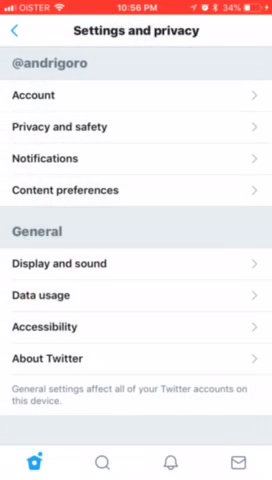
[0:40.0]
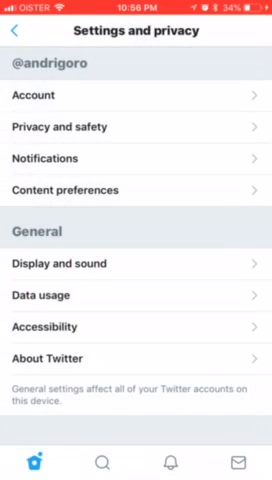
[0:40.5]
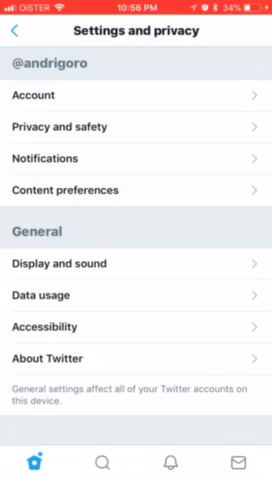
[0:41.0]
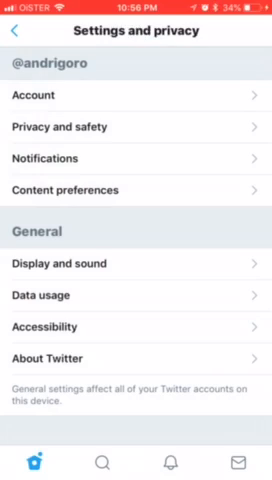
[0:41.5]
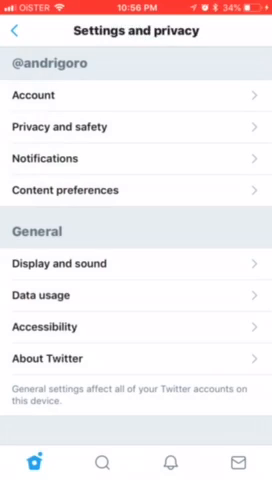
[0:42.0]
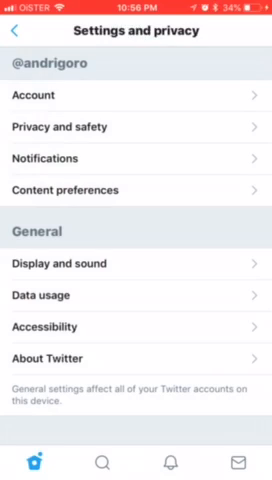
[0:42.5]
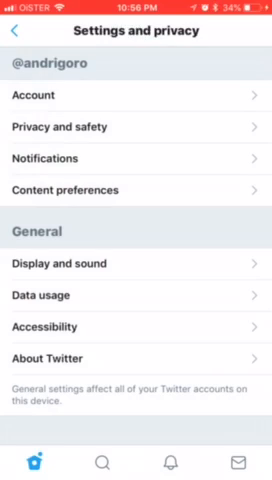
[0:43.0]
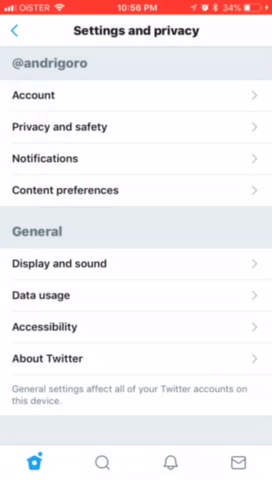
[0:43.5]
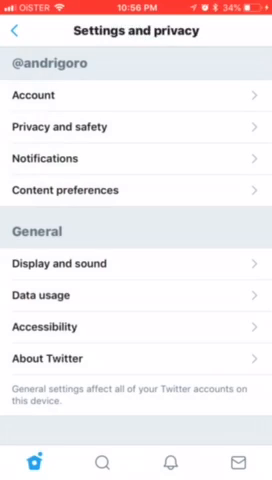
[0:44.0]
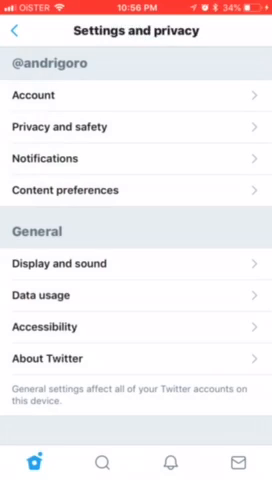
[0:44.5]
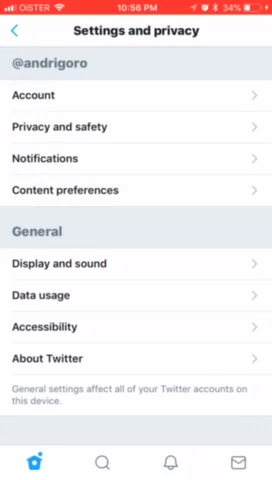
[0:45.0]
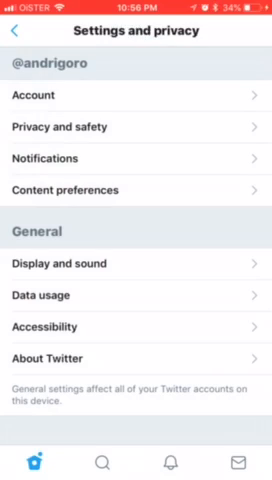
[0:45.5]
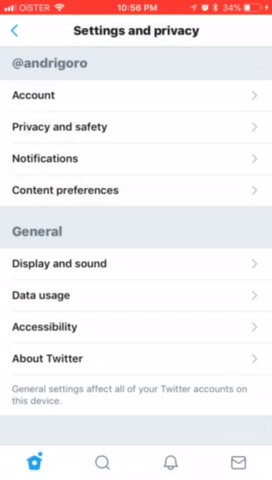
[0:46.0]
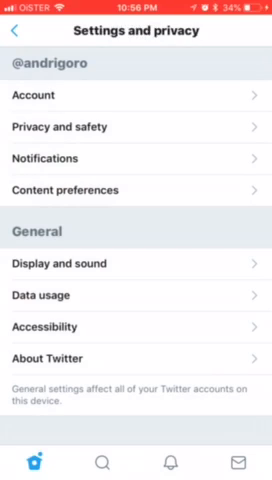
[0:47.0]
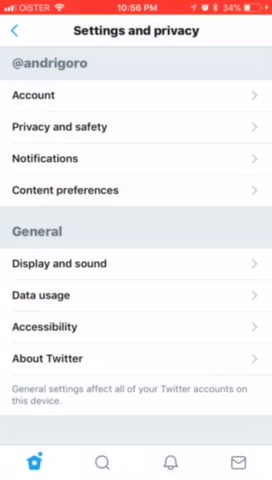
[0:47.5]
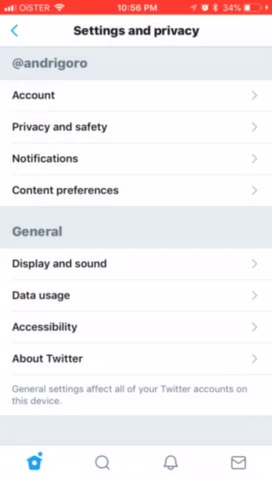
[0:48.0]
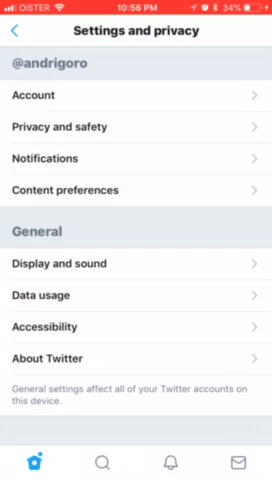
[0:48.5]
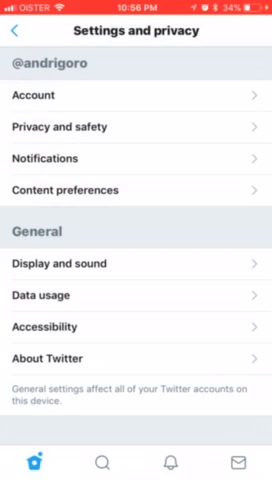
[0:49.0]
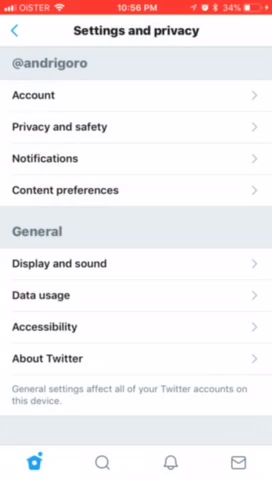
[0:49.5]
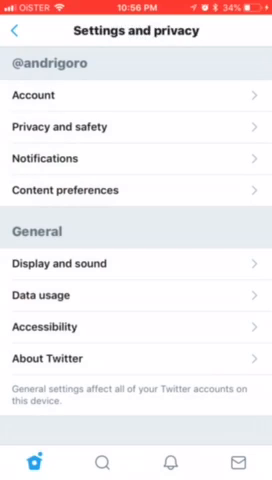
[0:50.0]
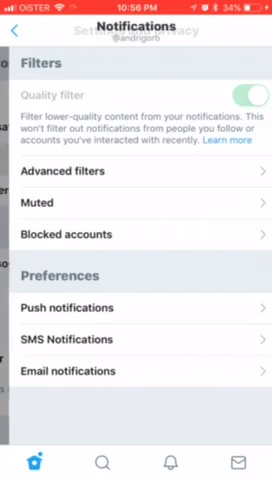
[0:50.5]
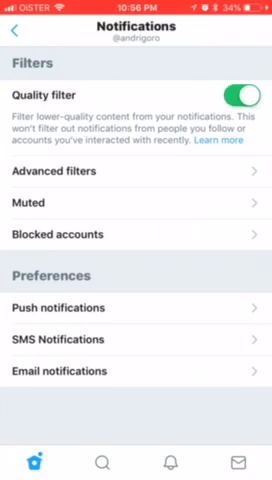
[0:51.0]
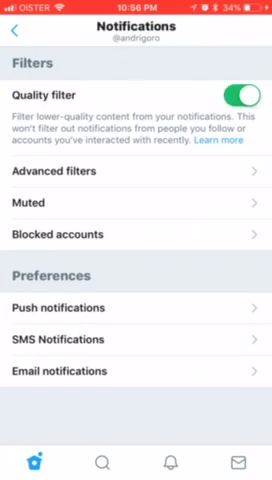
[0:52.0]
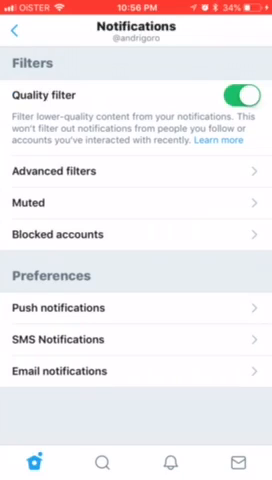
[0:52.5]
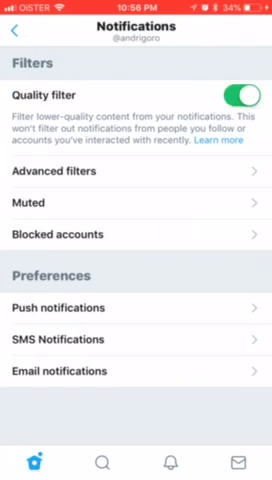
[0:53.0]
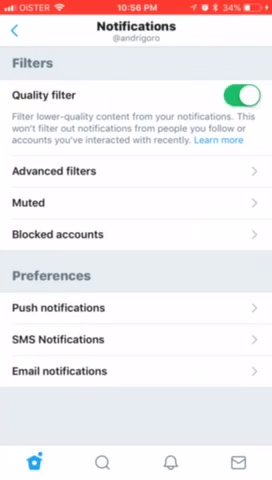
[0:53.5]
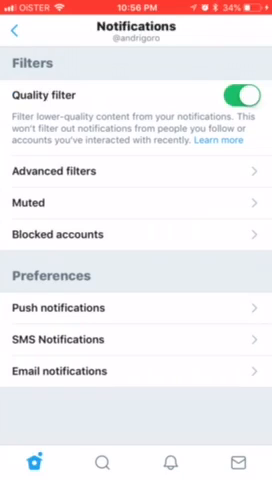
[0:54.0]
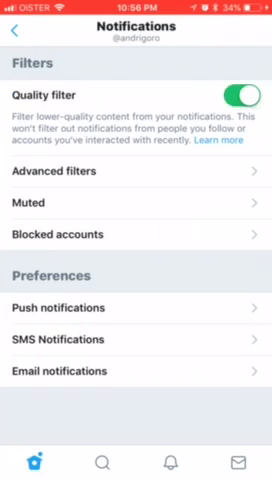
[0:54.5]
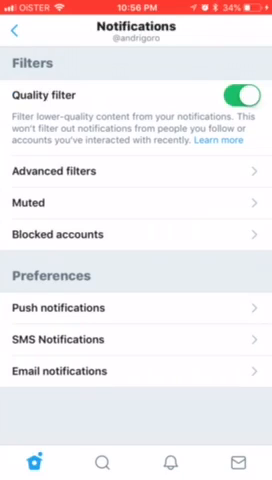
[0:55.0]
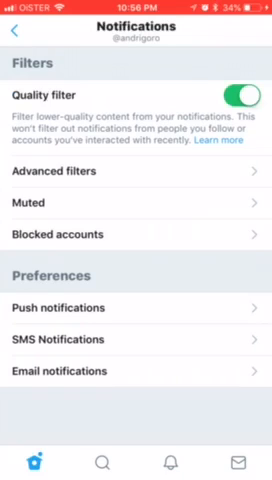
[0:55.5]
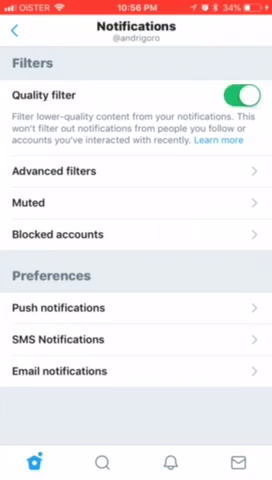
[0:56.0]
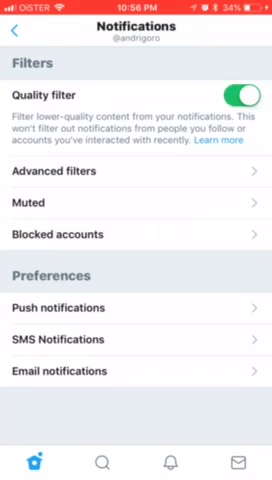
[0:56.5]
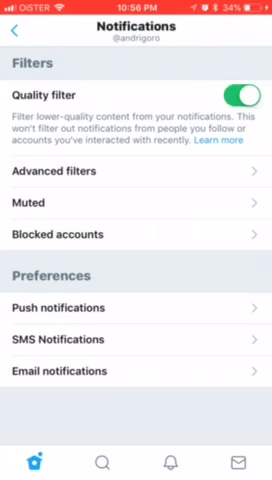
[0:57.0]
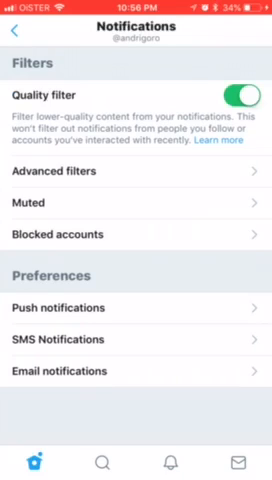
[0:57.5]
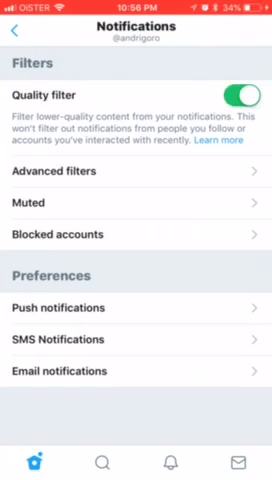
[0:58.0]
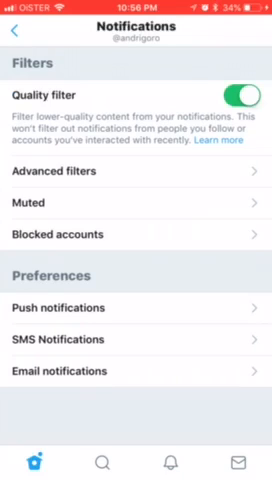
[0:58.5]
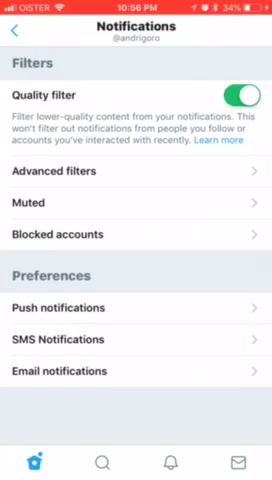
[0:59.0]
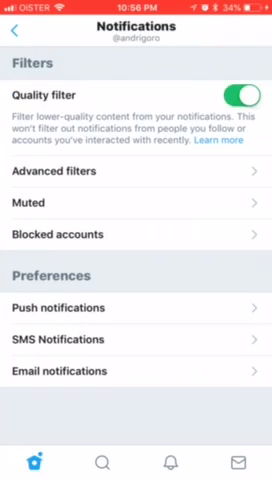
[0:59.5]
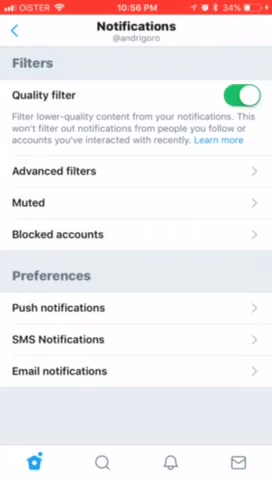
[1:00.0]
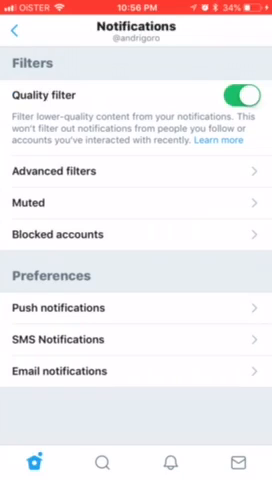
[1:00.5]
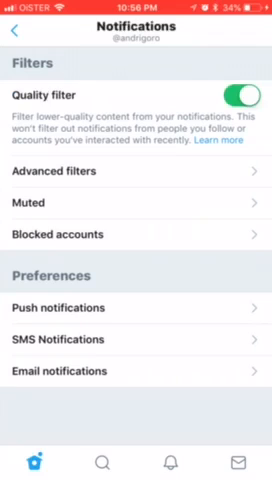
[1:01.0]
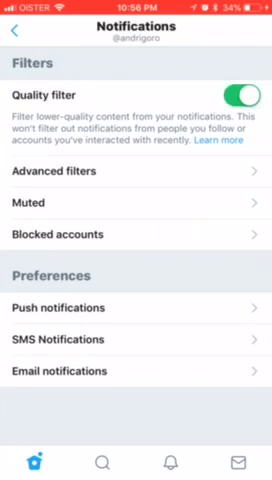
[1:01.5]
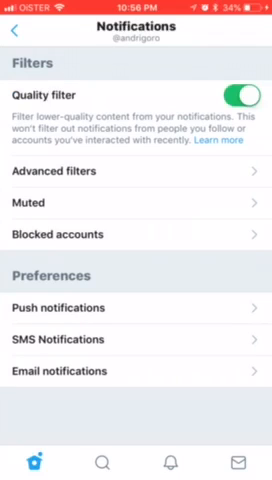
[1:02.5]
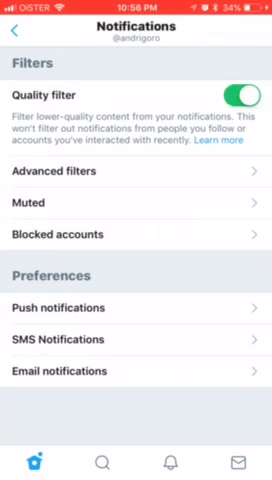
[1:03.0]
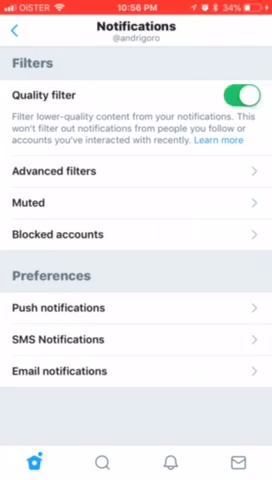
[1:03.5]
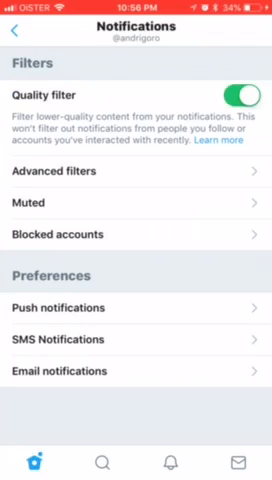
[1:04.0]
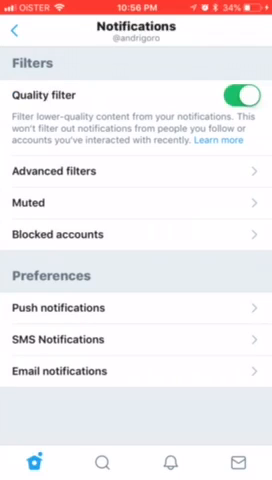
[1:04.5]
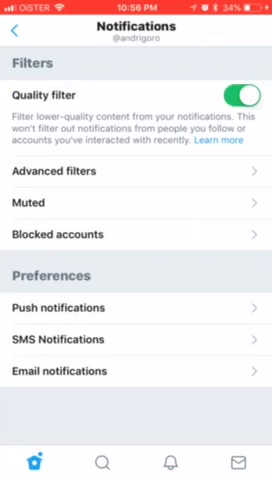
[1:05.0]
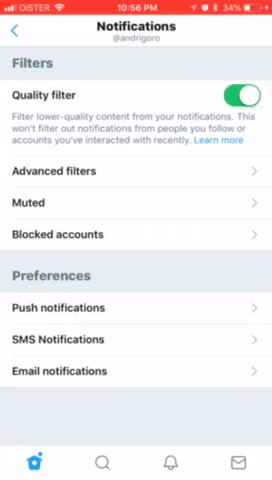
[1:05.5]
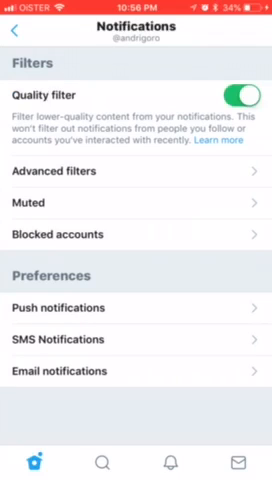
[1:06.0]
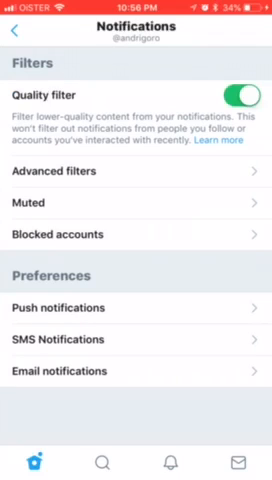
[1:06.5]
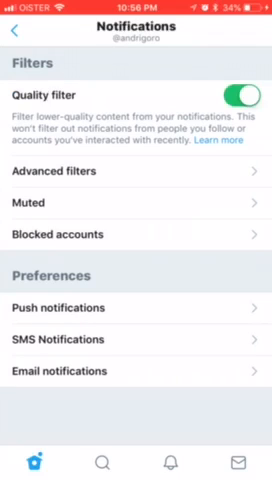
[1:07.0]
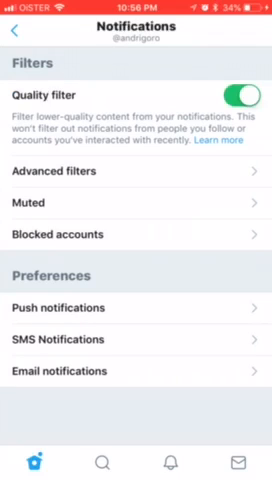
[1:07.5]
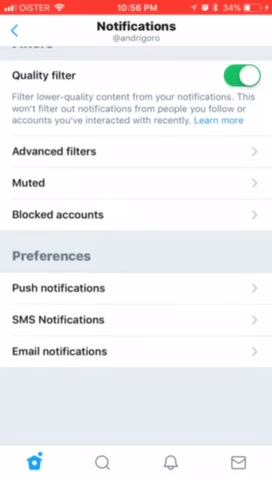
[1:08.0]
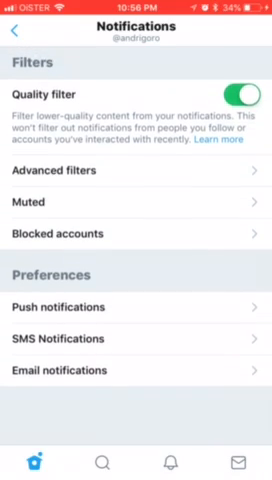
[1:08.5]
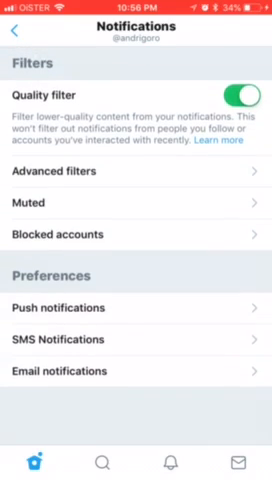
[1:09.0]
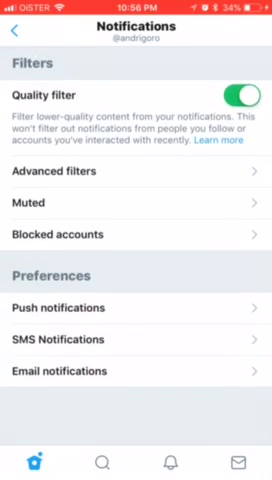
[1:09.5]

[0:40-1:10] The person is on Twitter under the name Andre Goro, in the settings and privacy section. A quality filter option reads "filter lower quality content from a notification" and "this one filter out notifications from people you follow or accounts you have interacted with recently." There are also advanced filters, muted and blocked contacts. The settings and privacy menu lists account, account privacy, account privacy and safety, notifications, content preferences and general; under general are display and sound, data usage, accessibility and about Twitter. A general settings page says "general settings affect all of your Twitter accounts on this device," suggesting the person might have more than one account on this iPhone. The battery is at 34%, the phone is connected to Bluetooth and Wi-Fi, and the time is four minutes to 11. The quality filter is turned on.